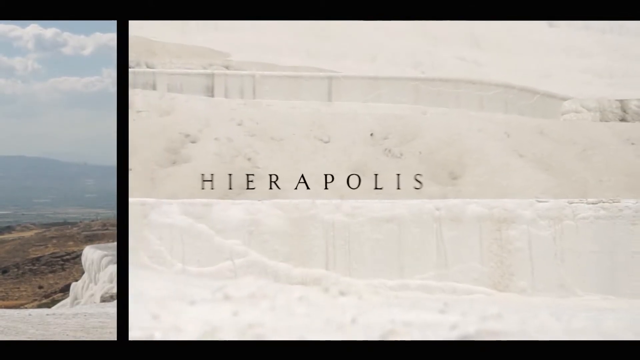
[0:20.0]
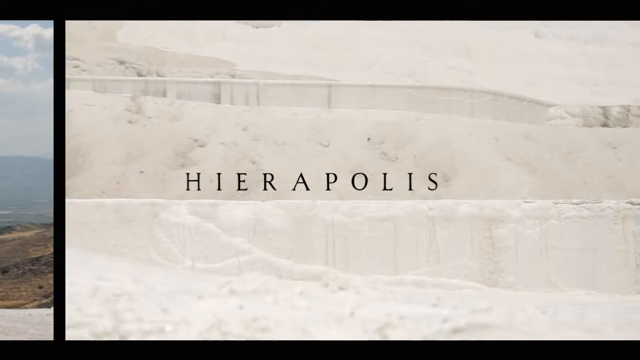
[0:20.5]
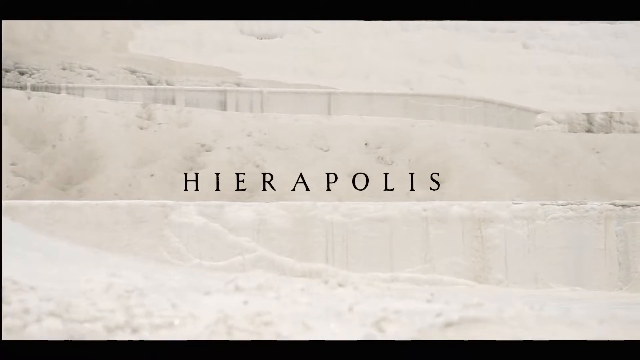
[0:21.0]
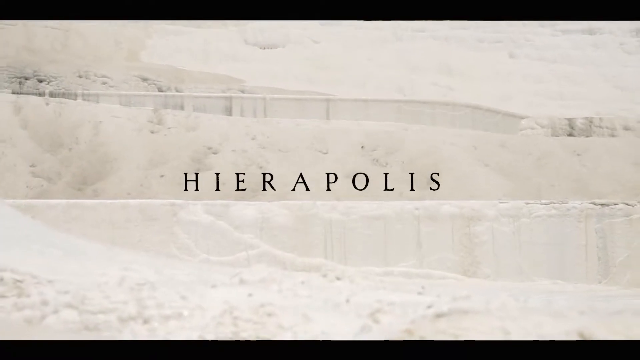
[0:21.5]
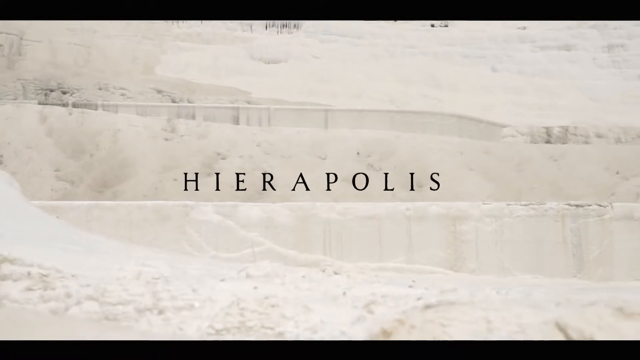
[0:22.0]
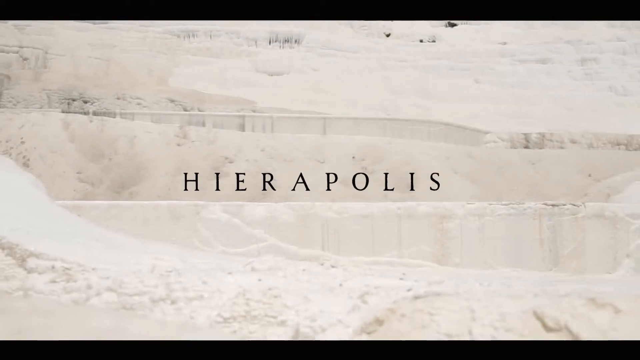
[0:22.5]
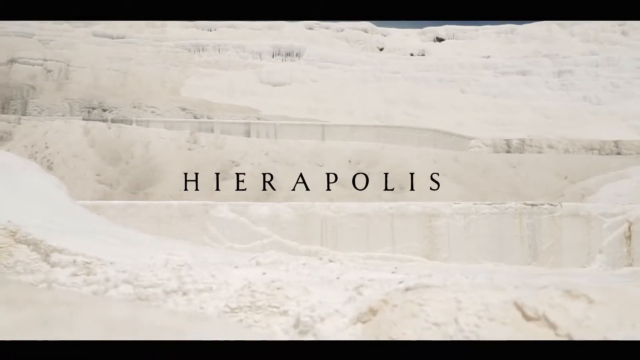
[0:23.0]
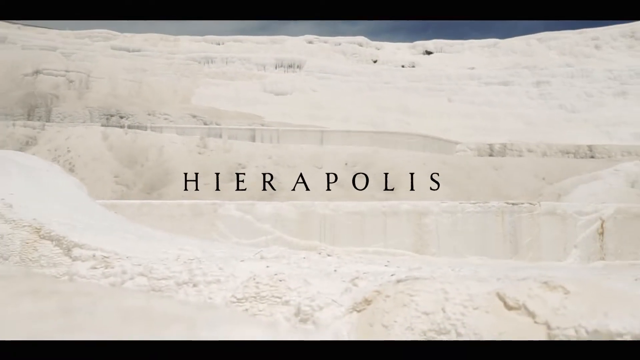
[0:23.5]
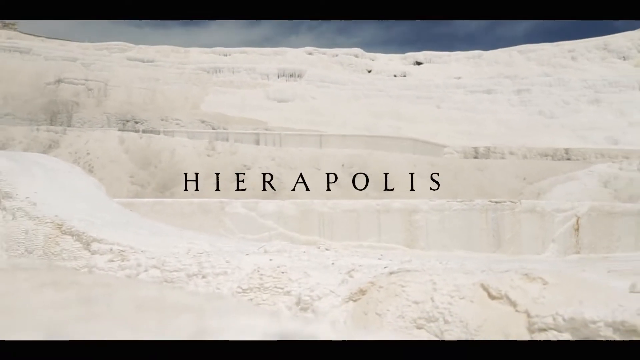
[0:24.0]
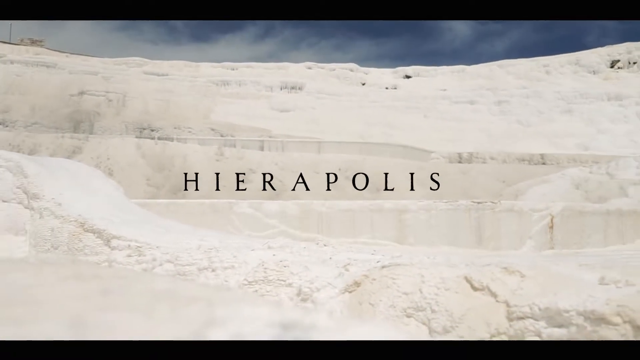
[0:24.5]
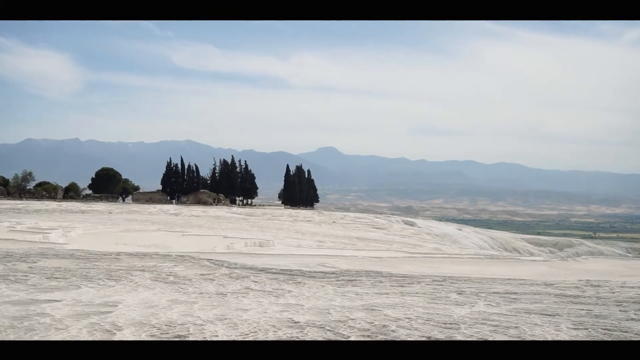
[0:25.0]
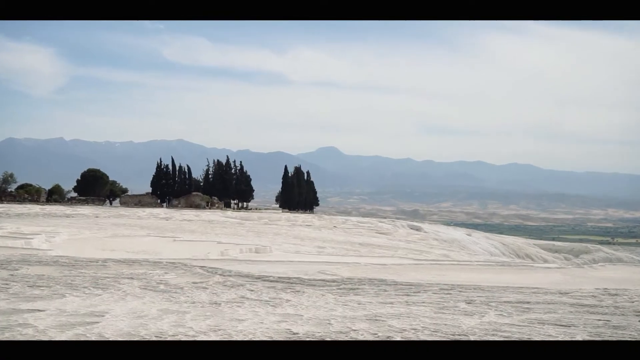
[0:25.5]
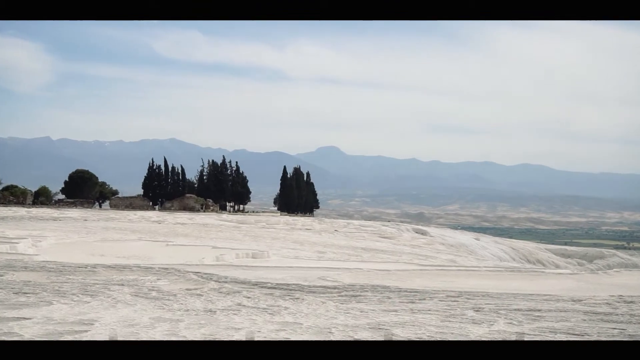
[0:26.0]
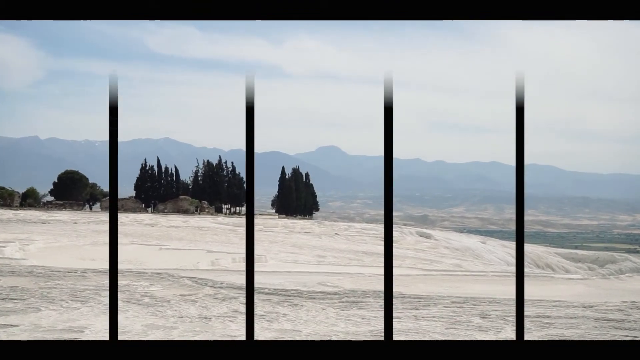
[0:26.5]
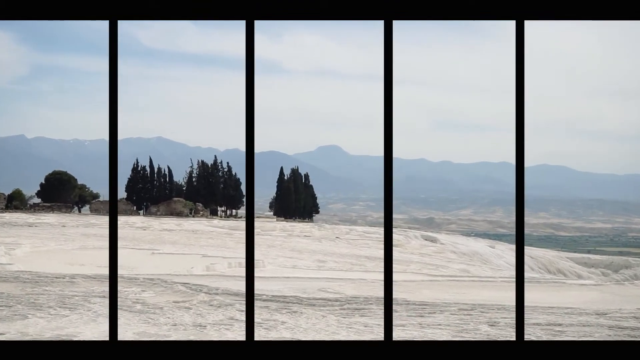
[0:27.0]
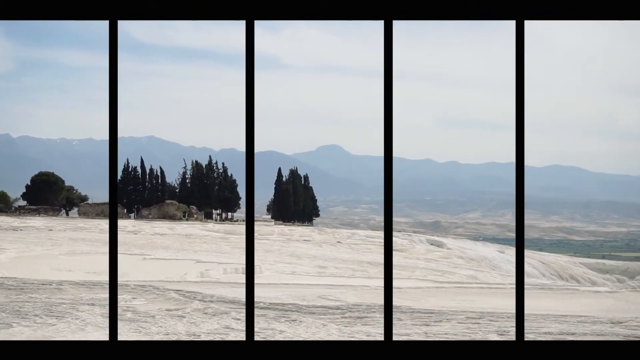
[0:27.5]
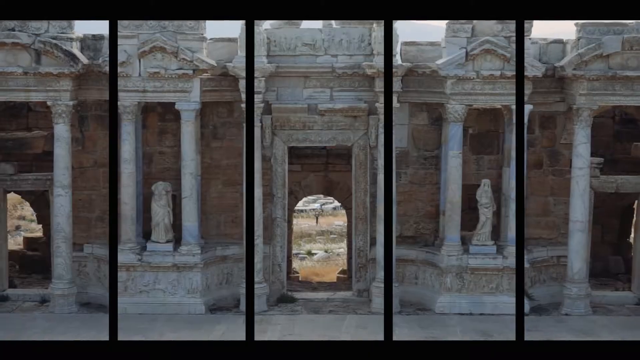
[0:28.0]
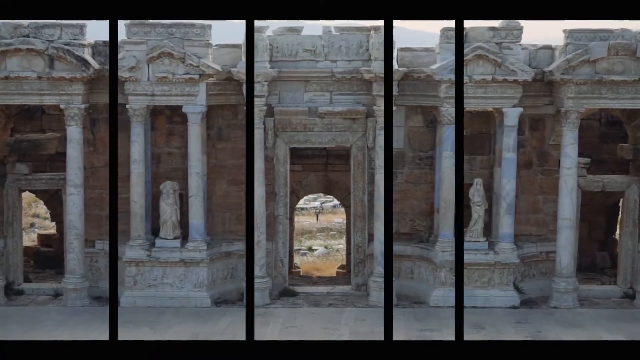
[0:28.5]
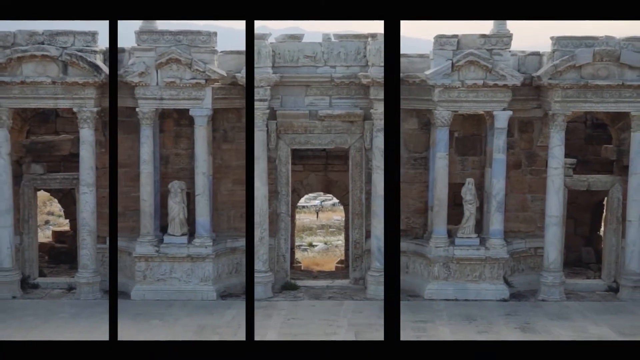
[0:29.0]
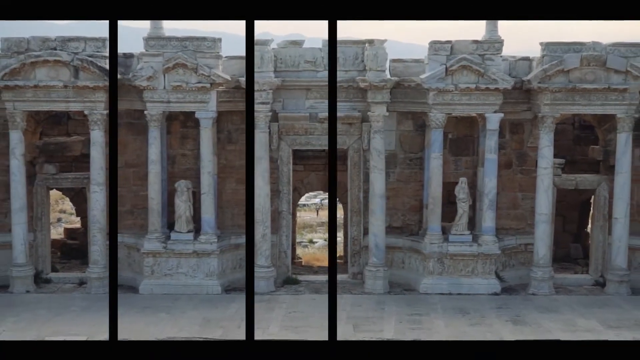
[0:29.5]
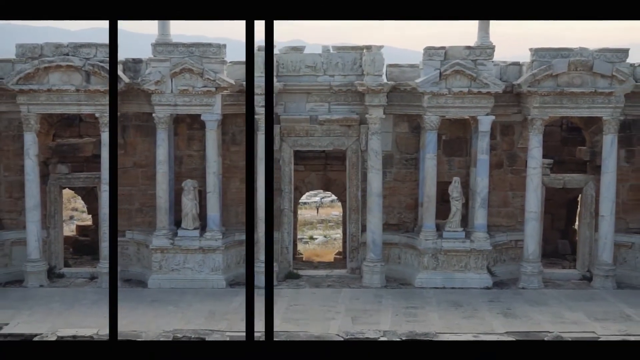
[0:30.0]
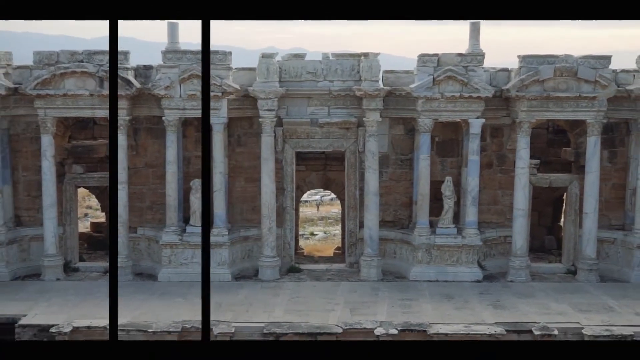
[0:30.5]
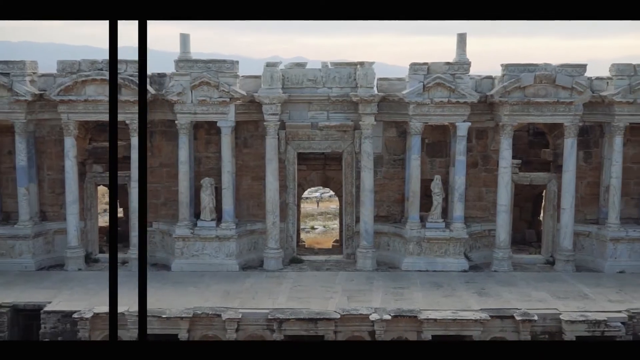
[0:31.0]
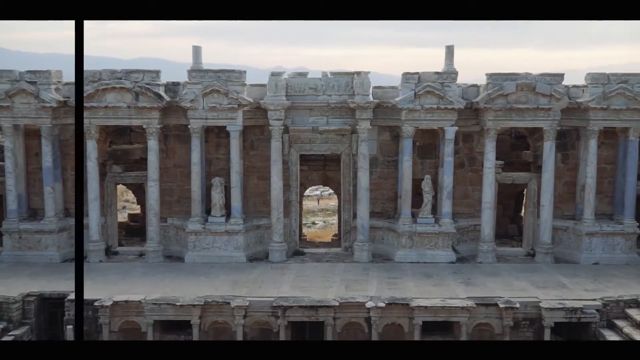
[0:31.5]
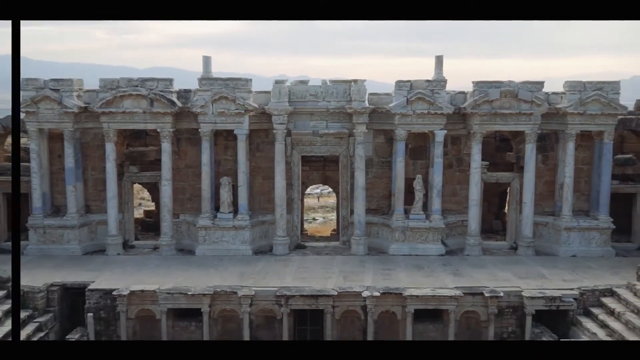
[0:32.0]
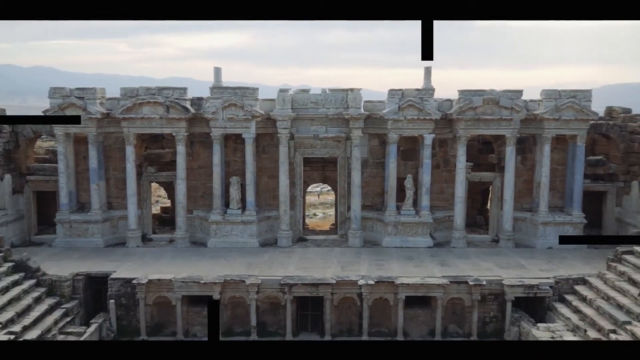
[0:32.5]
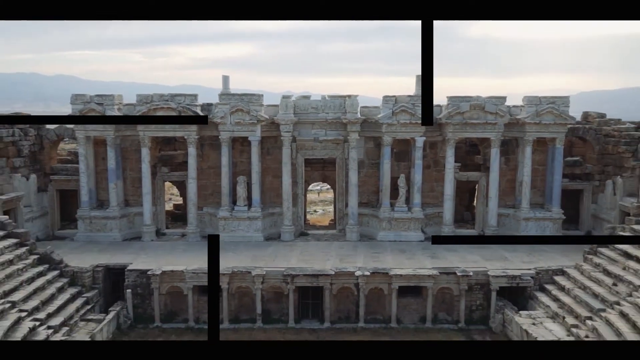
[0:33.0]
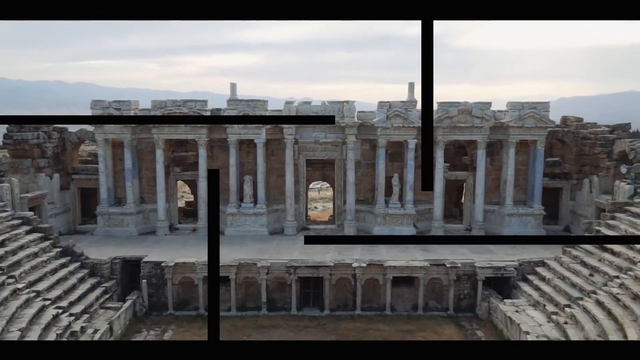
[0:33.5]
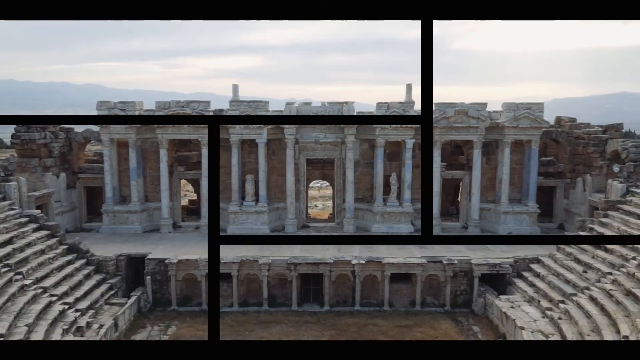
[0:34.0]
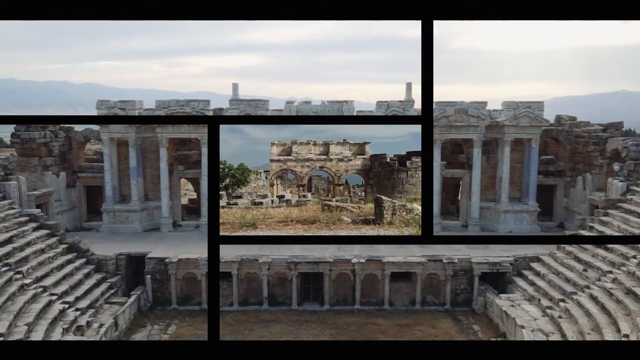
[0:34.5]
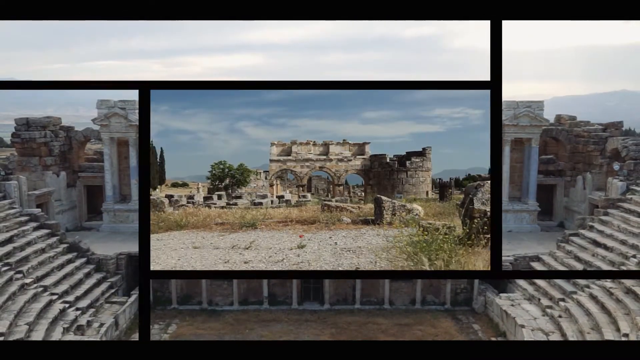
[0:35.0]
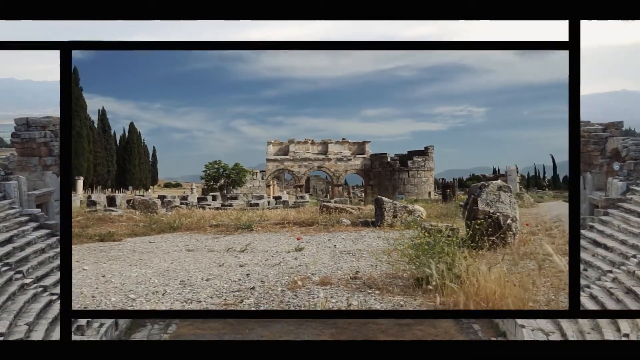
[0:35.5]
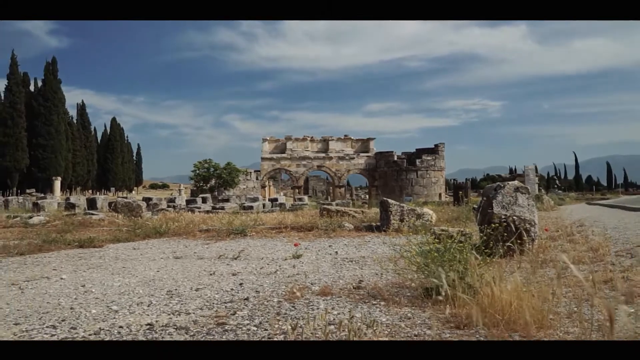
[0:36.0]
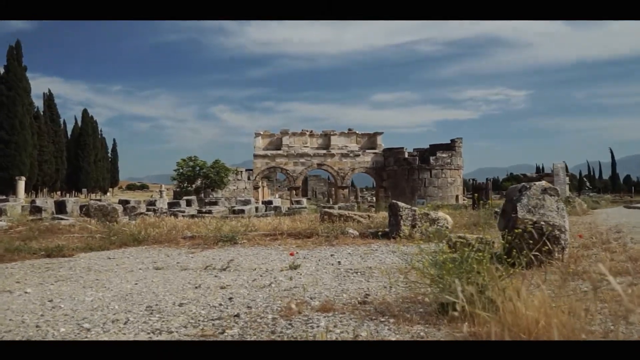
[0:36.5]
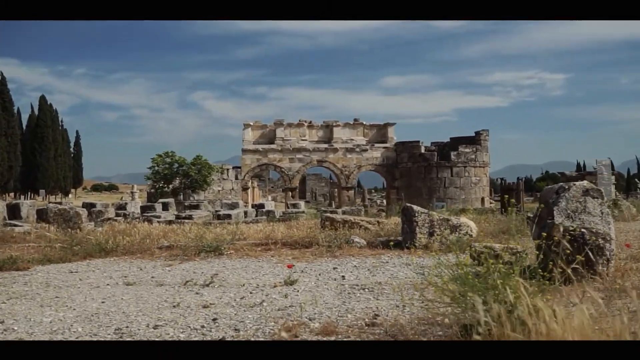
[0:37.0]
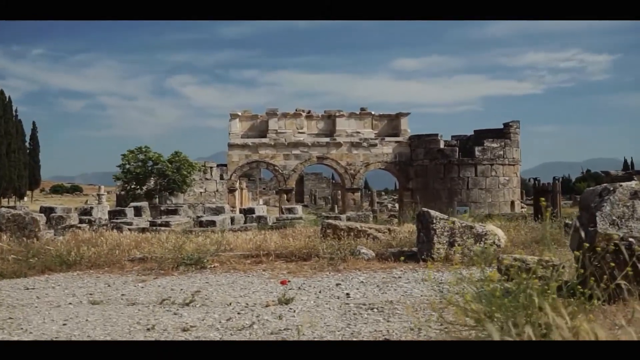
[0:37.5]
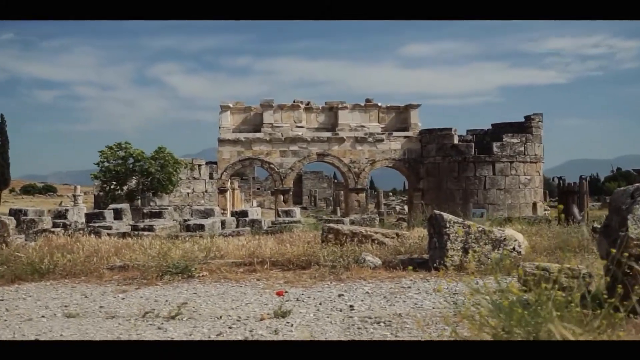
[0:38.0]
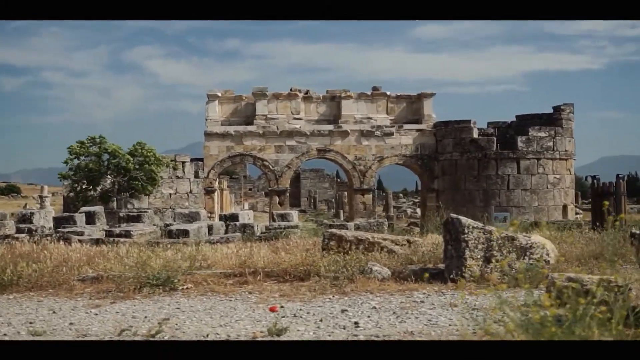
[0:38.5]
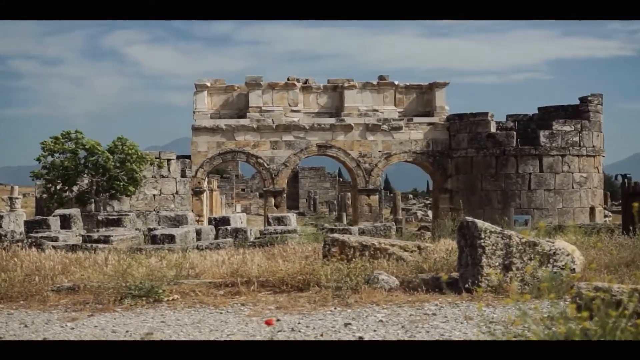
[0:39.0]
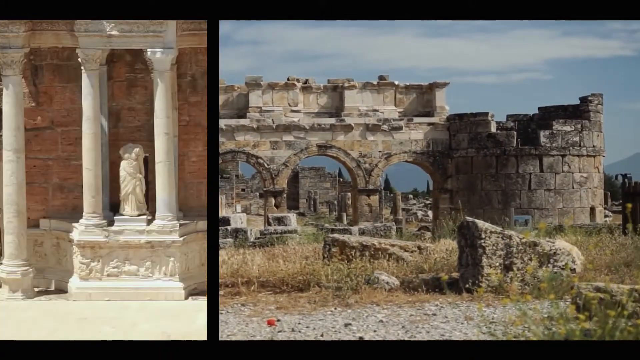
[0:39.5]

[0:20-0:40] The site of Hierapolis in Turkey shows ancient structures, starting with a coliseum that is almost intact, with rows of seating and a stage. There are also walls and other parts of the site. The site is located in the middle of nowhere.